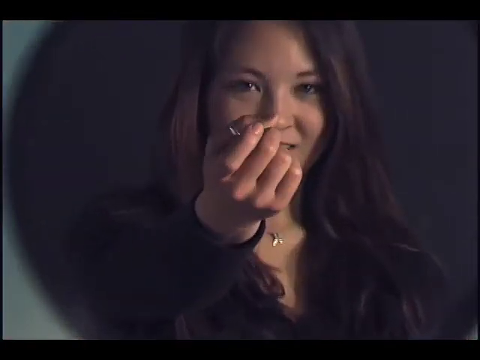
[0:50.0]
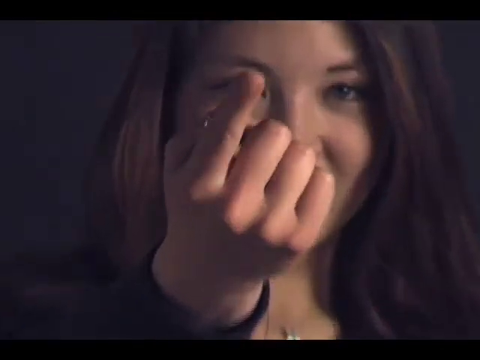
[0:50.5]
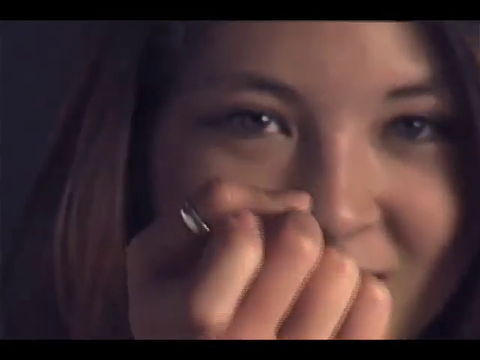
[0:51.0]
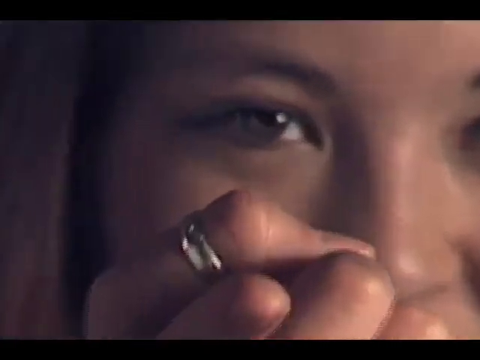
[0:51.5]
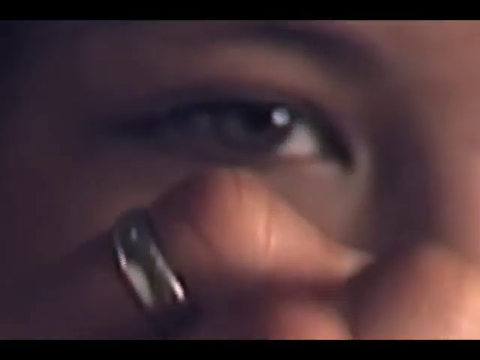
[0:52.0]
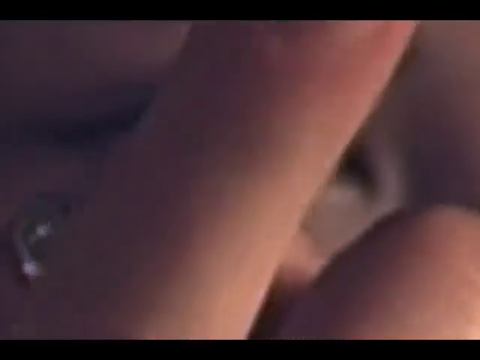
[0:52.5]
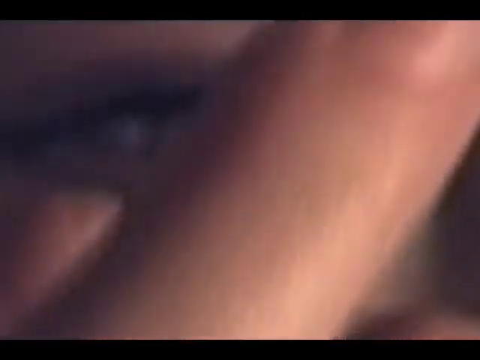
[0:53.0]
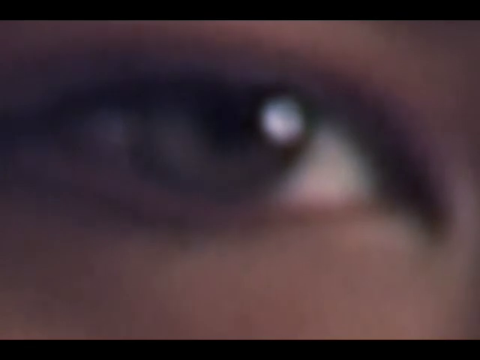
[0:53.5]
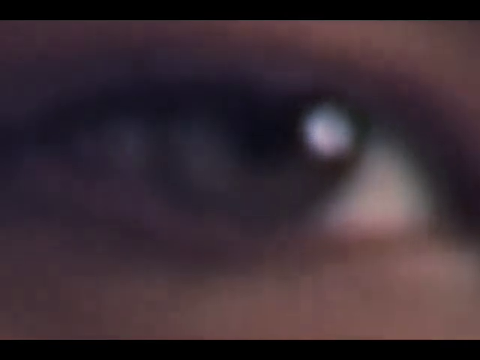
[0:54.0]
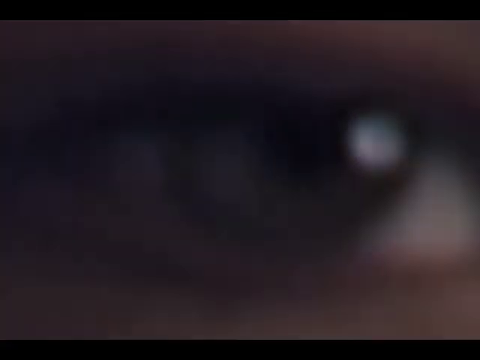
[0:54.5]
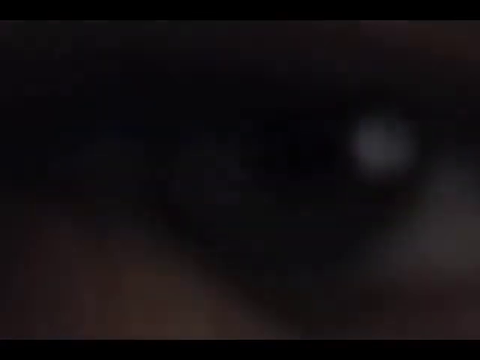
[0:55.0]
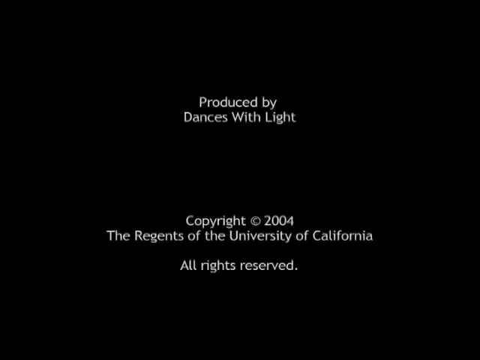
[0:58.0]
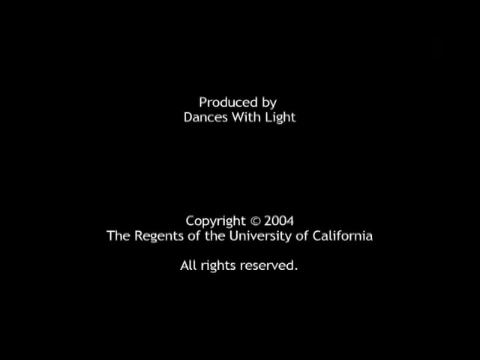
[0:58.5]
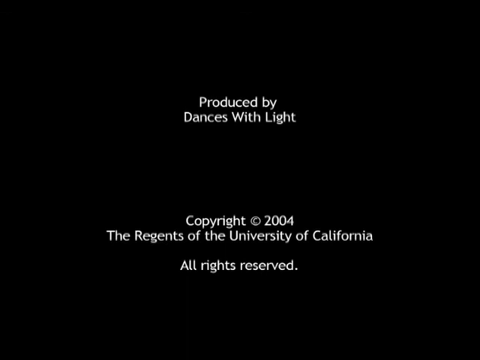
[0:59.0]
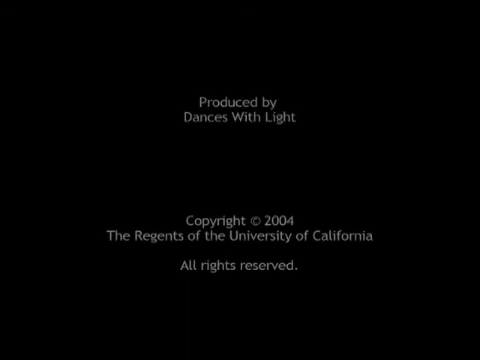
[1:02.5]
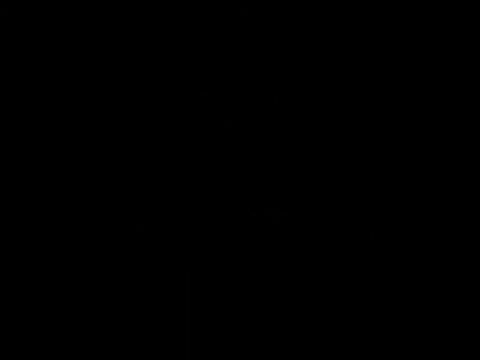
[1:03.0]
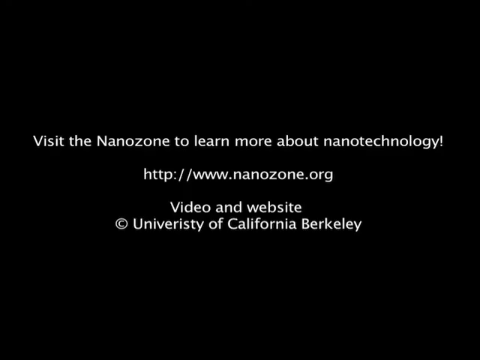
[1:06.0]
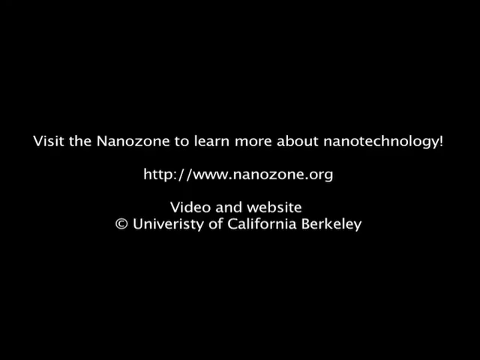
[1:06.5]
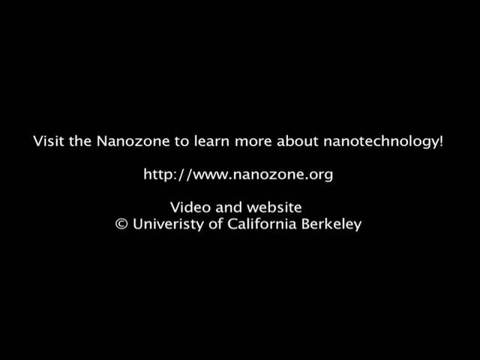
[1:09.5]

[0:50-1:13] A fairly close-up shot shows the woman, who may be 25 to 28 years old, with long brown hair with some lighter brown highlights, against a dark gray background. She wears a gold necklace with a charm that cannot be made out, a long-sleeved black shirt, and a ring on her right thumb. Her right hand is extended with the palm facing up, and smiling, she keeps using her right index finger to motion people to come here. Her eyes are then shown close up; they are hazel. The screen fades to black and white words appear: "Produced by Dances with Light, Copyright 2004, The Regents of the University of California. All rights reserved." The screen fades to black again, then white words read "Visit the Nanozone to learn more about nanotechnology!" followed by a website address, and beneath it "Video and website copyright of University of California Berkeley."